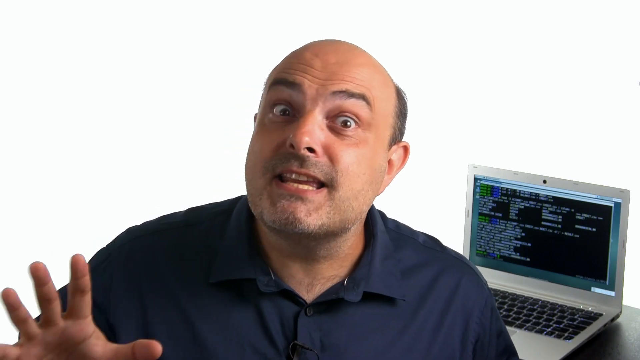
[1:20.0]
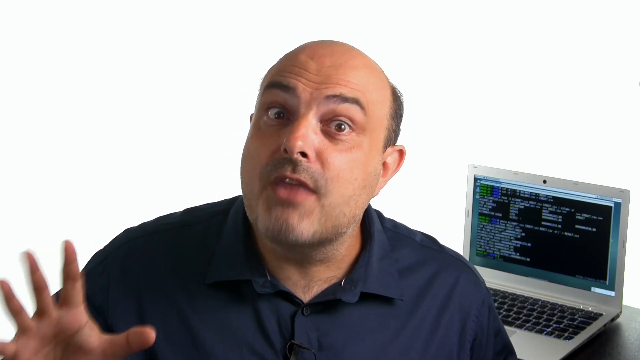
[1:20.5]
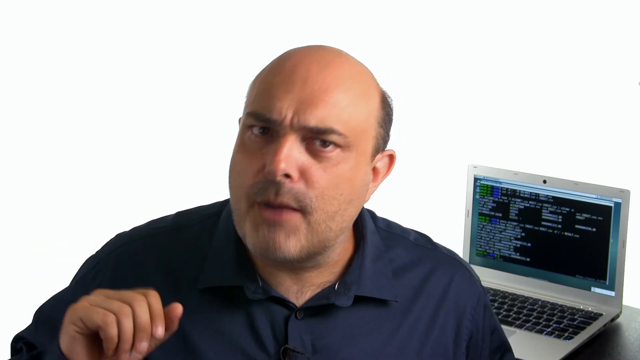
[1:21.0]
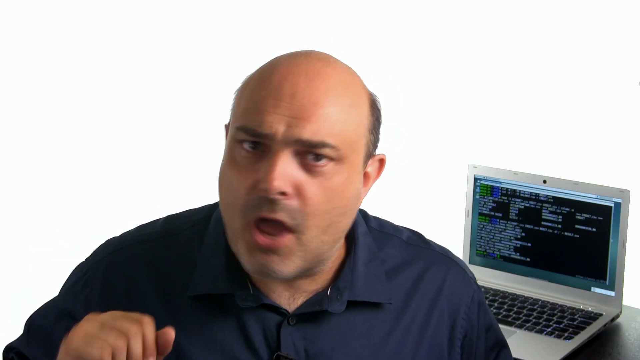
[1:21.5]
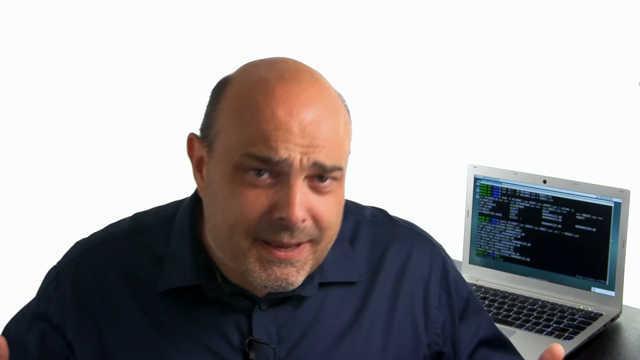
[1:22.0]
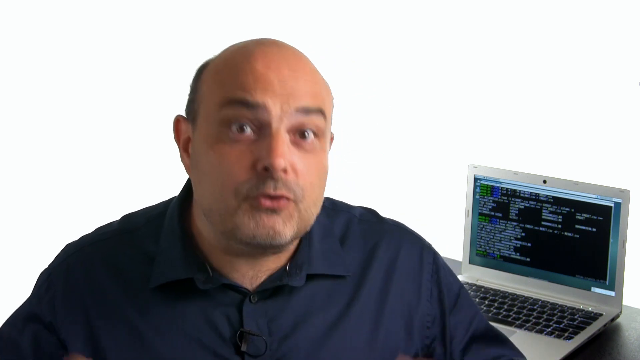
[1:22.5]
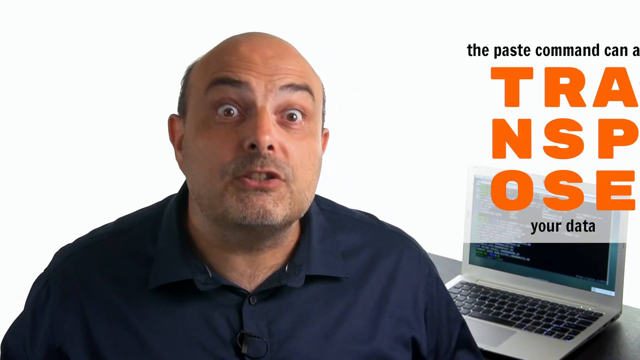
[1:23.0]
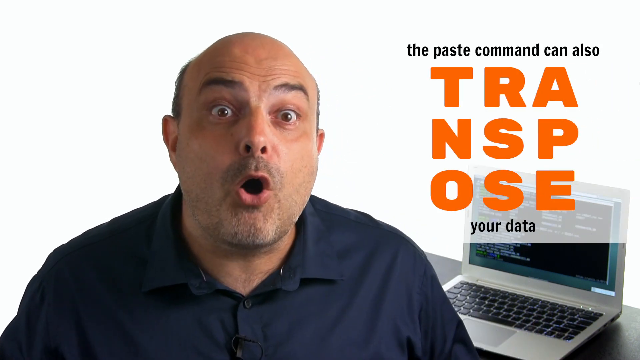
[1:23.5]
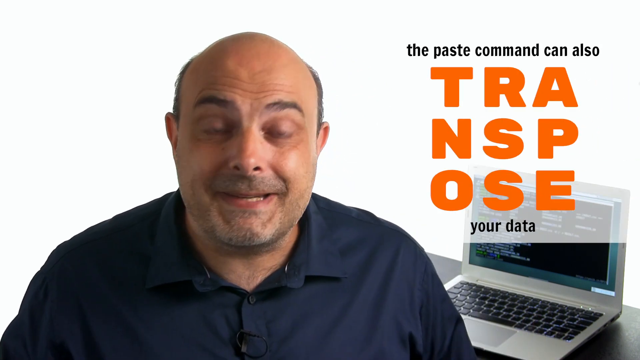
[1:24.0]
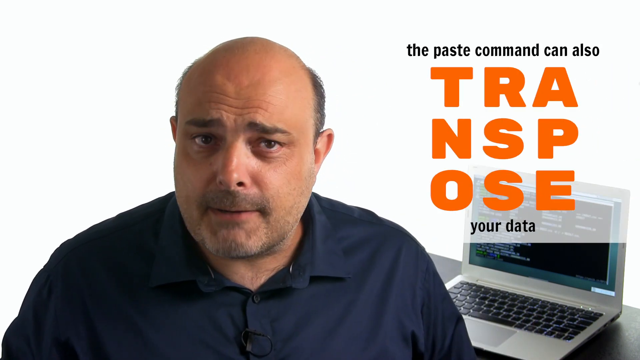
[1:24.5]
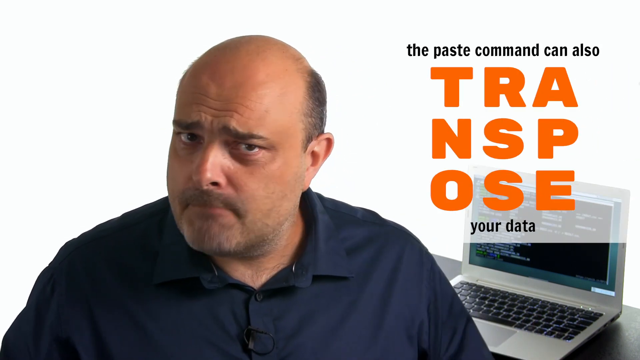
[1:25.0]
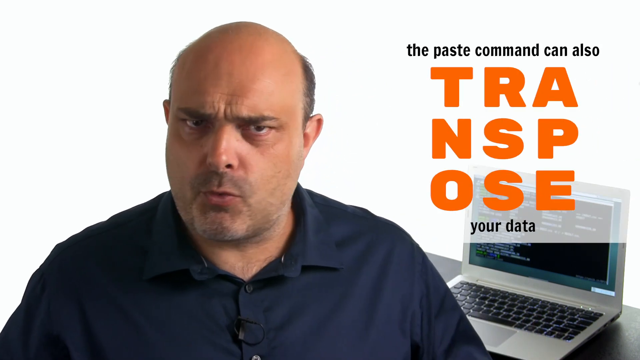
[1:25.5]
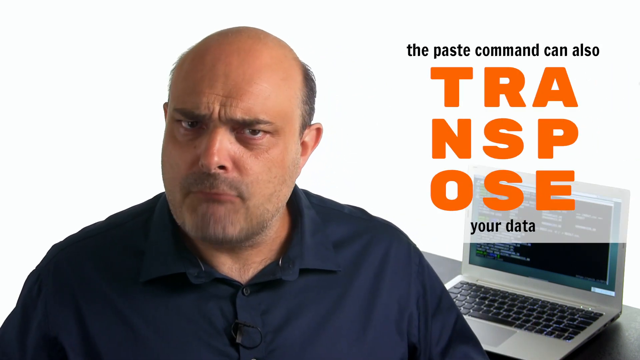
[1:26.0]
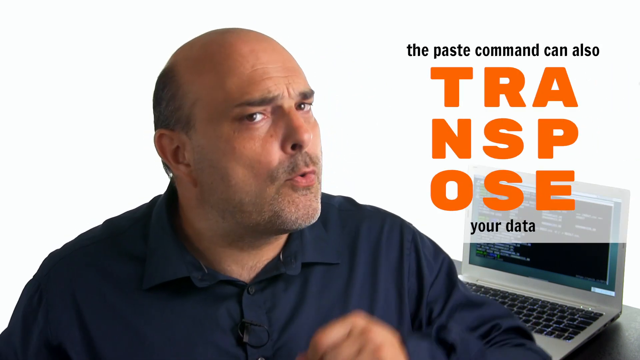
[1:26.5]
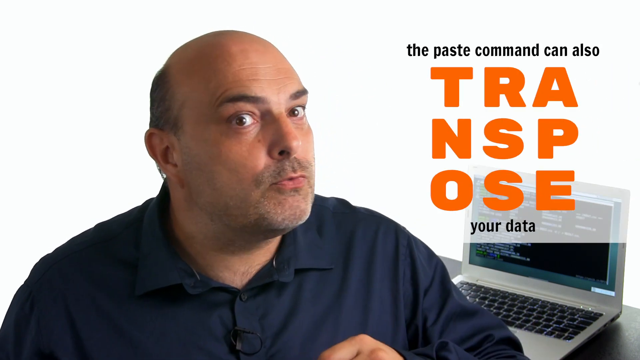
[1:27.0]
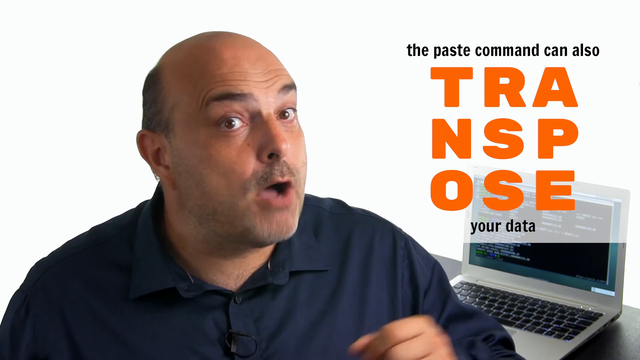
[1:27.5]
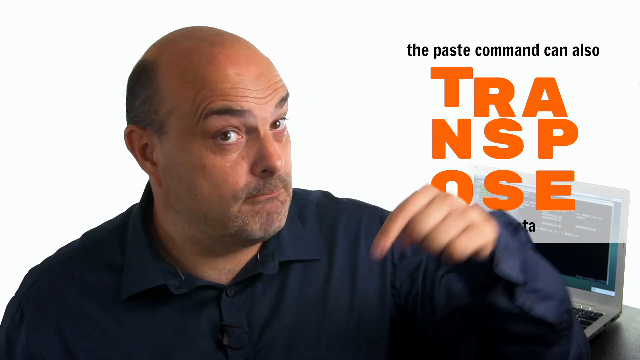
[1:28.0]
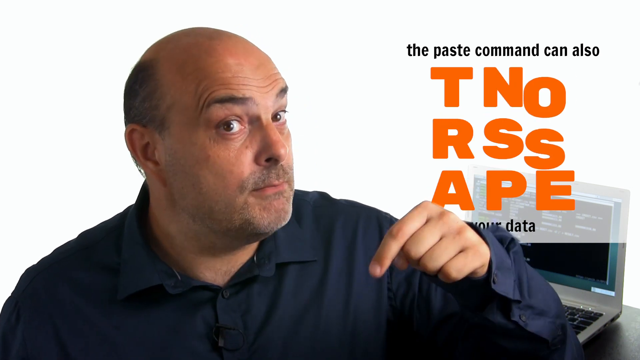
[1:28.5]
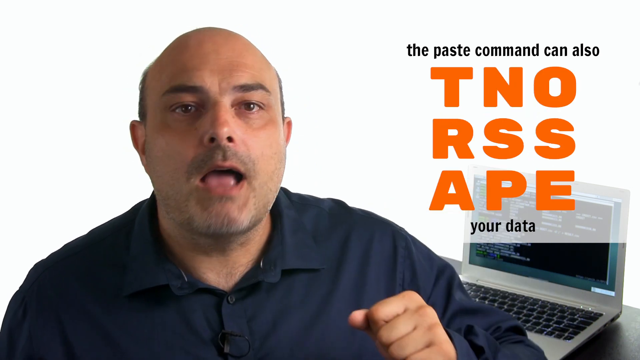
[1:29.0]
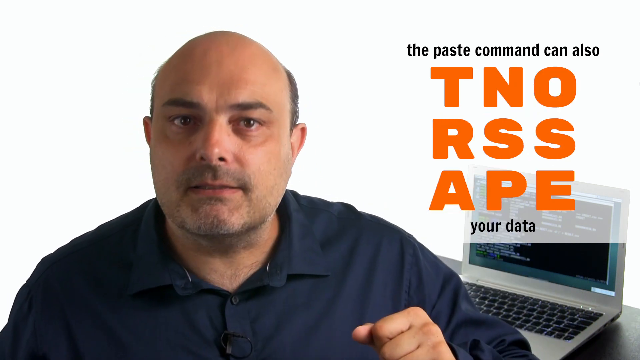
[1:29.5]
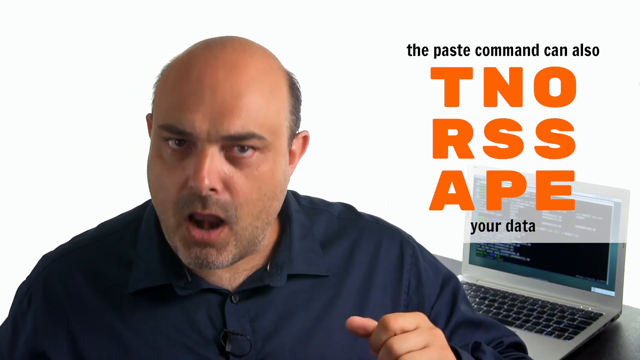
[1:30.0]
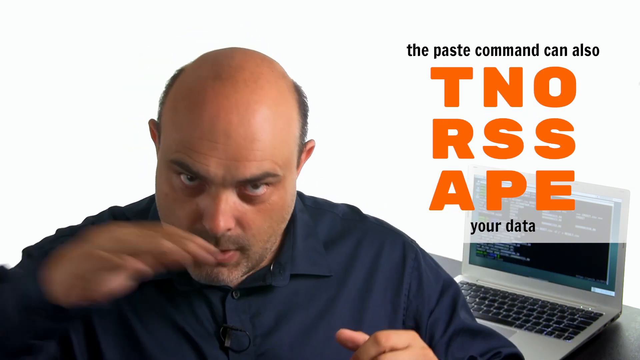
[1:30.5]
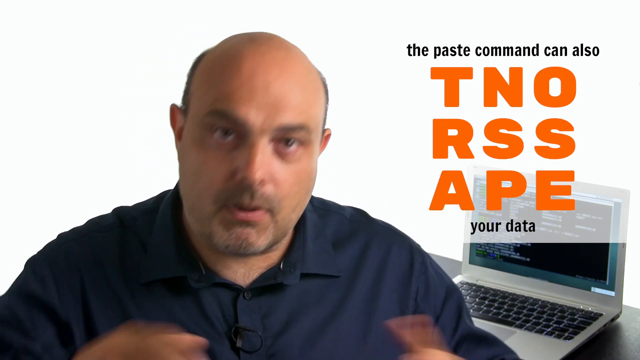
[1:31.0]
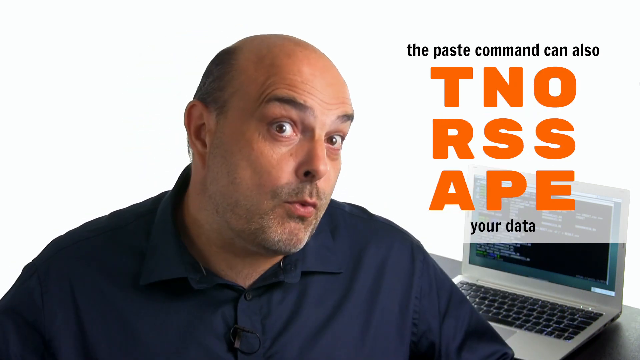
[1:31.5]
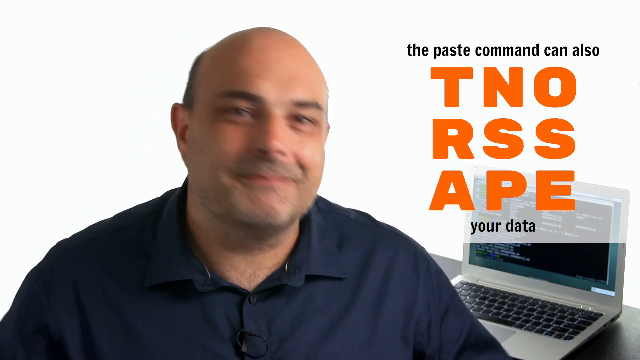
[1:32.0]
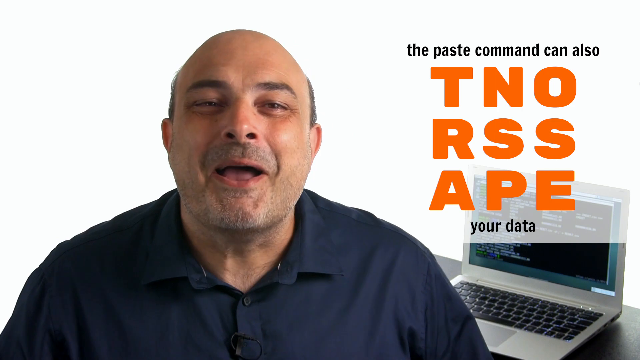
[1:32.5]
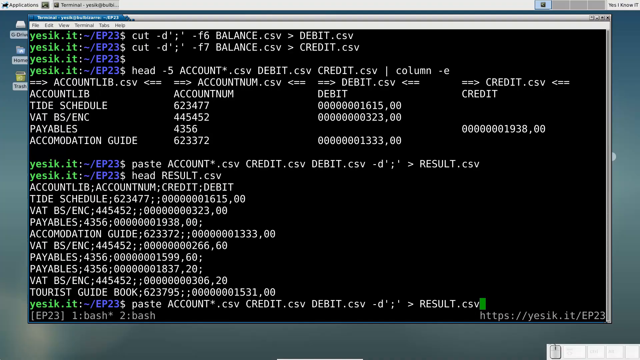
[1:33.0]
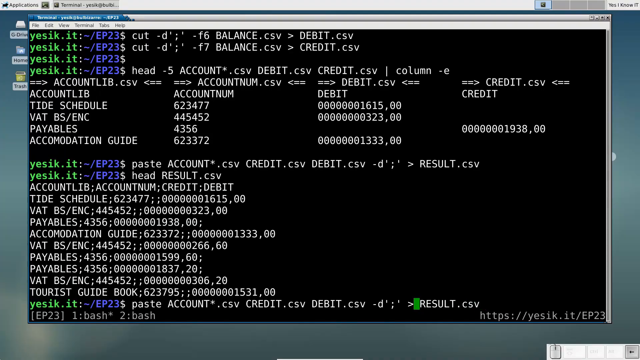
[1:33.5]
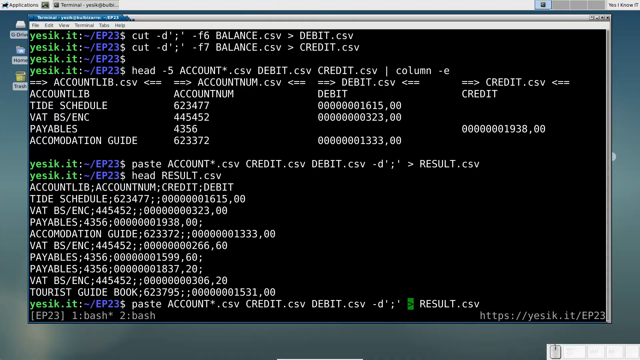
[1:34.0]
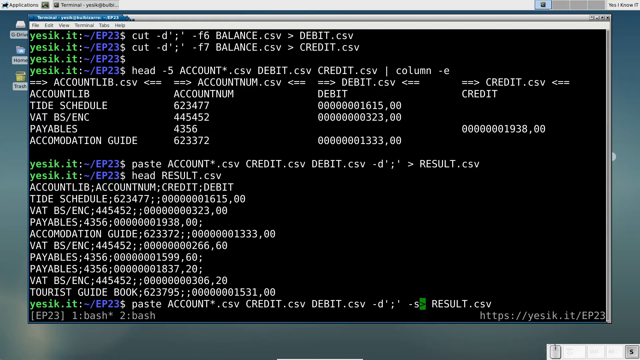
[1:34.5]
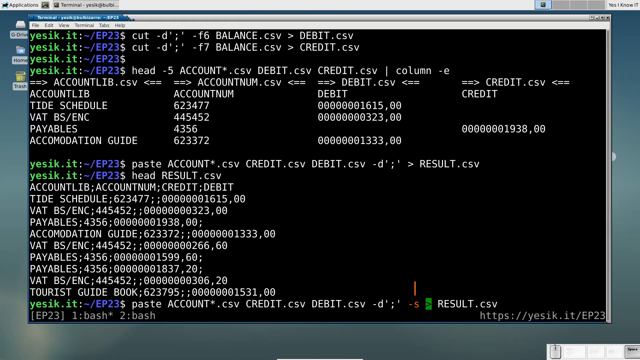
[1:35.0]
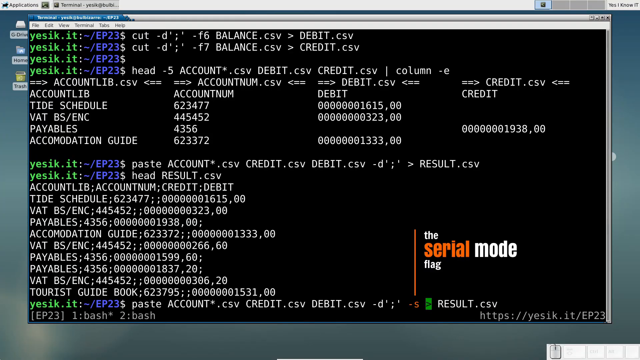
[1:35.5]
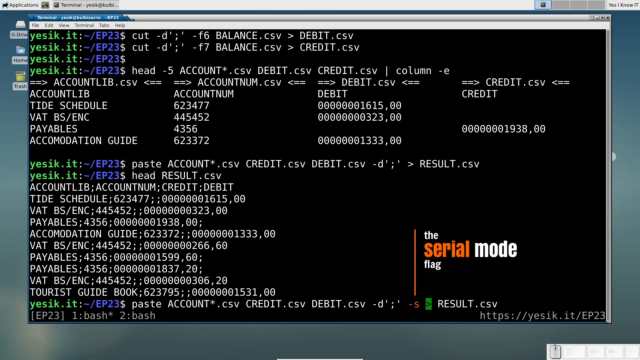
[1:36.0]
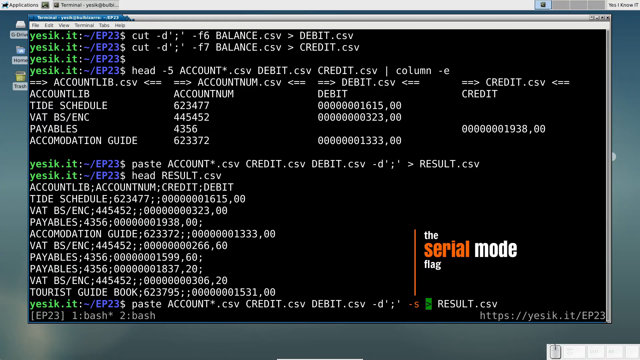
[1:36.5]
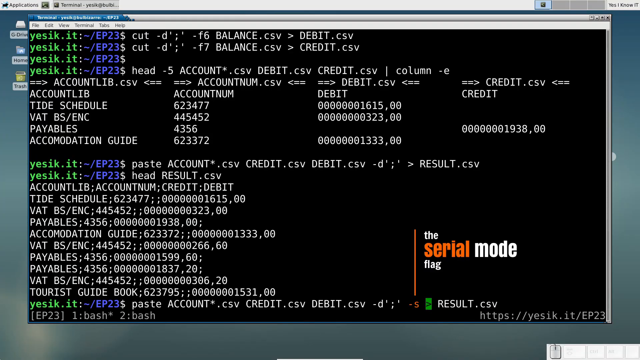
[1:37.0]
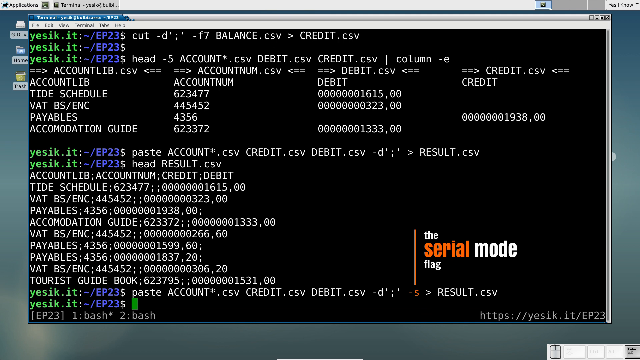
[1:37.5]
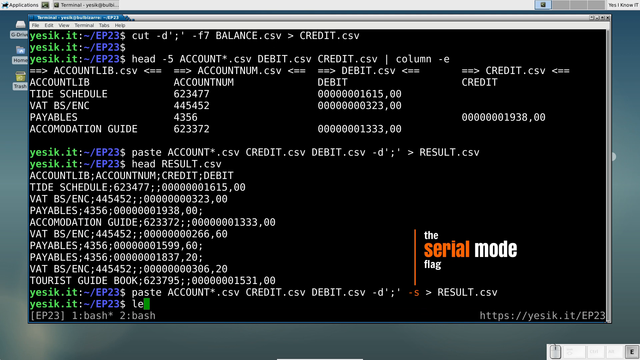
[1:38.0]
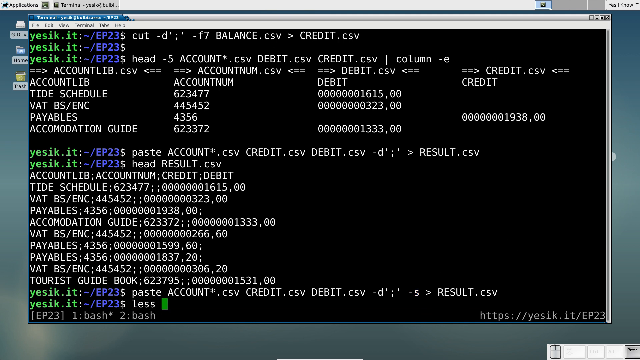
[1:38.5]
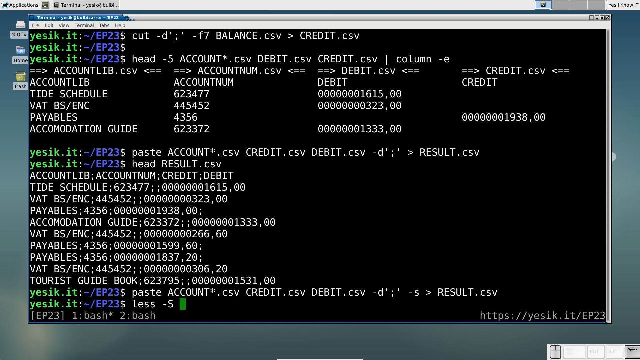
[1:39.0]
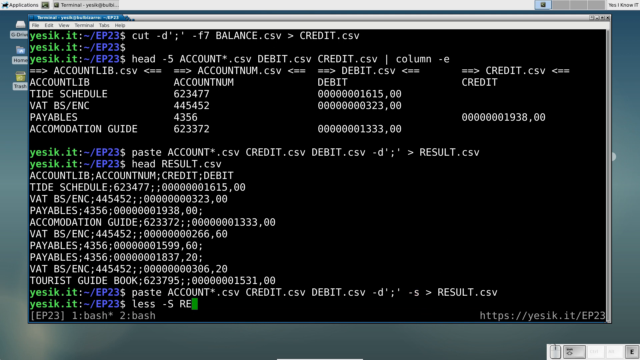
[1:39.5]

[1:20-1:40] The man waves his hand over to the left, his head still kind of tilted to the right, drops his hand down a little, scrunches his eyebrows down and kind of moves back to the right a little. Text comes in from the right: "the paste command can also" in black lettering, then below it in bold orange "TRA," "NSP," "OSE," and under that in small black text "your data." With his hands off screen, he kind of makes curious-looking faces with his eyebrows down, makes a little sad face, turns his head to the right, brings his right hand up over the bottom of the screen and down, then brings it back up as he raises his eyebrows and points down. Talking, he leans his head forward and brings his left hand up, palm downward, with just the sides of his fingers visible. He then looks straight ahead and smiles widely as he talks. It cuts back to the laptop screen, where more information is being filled in.